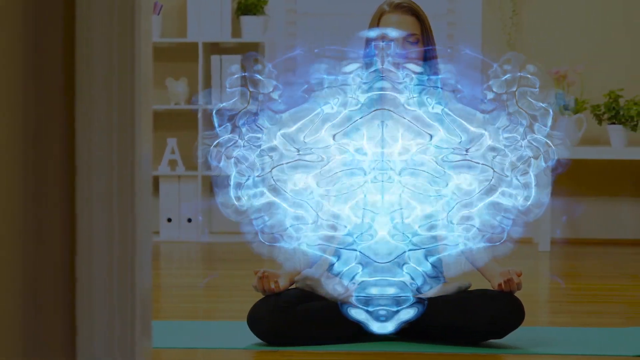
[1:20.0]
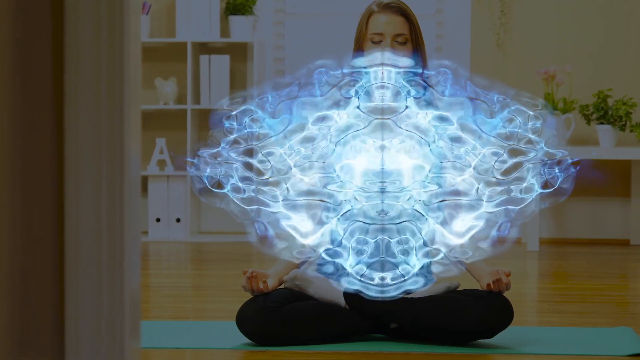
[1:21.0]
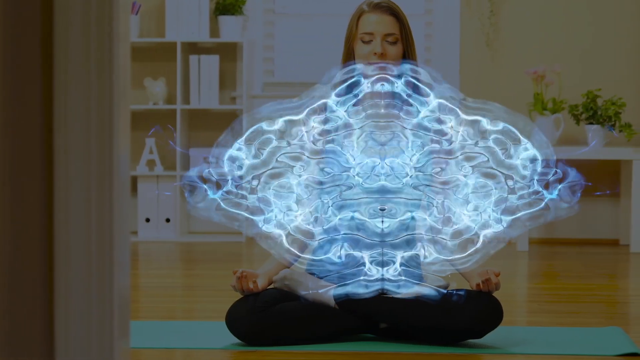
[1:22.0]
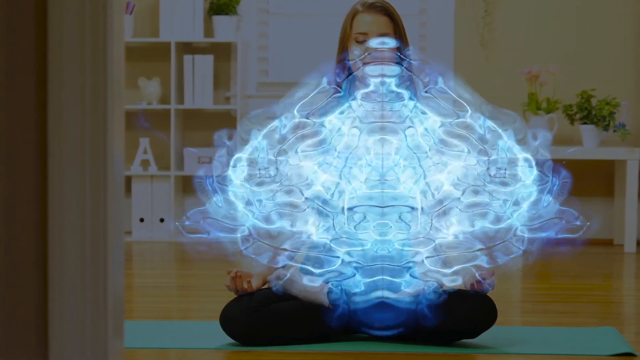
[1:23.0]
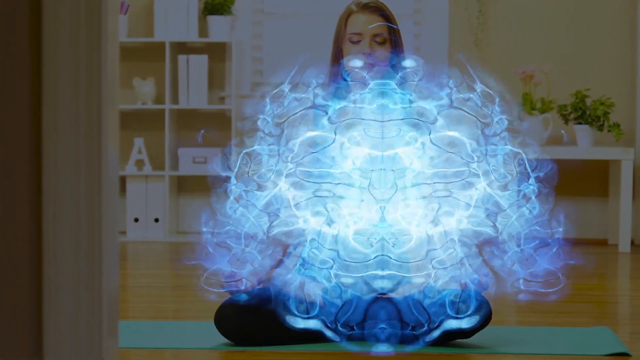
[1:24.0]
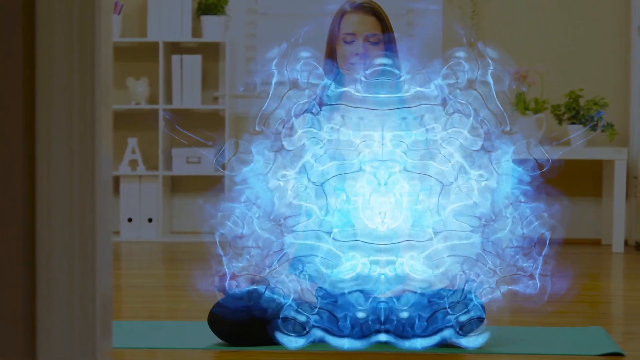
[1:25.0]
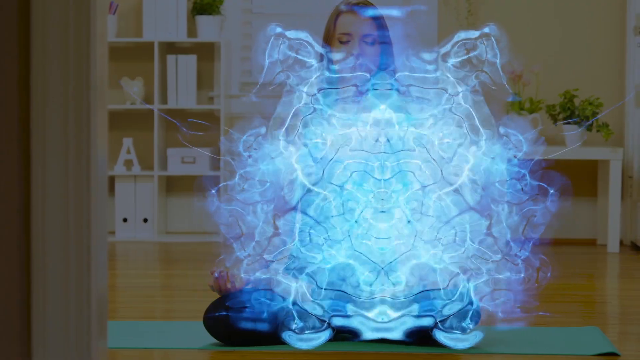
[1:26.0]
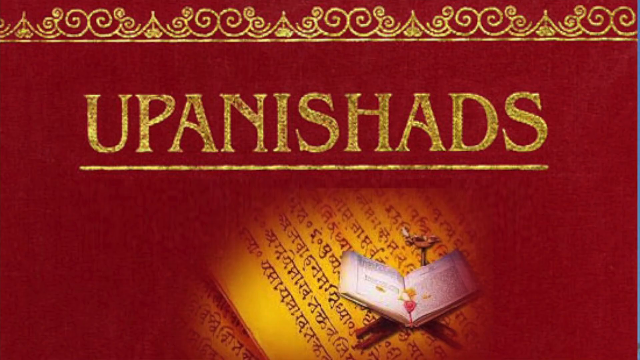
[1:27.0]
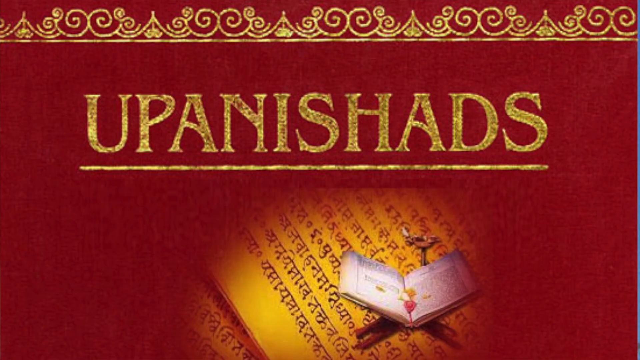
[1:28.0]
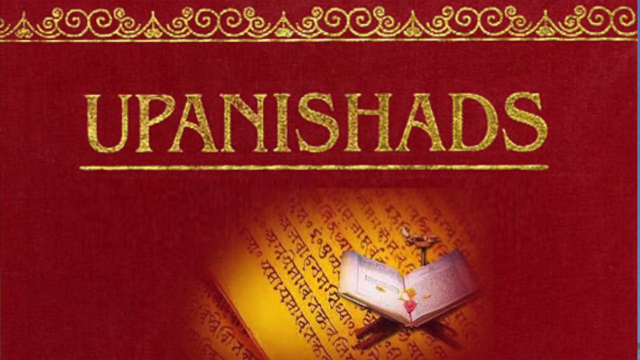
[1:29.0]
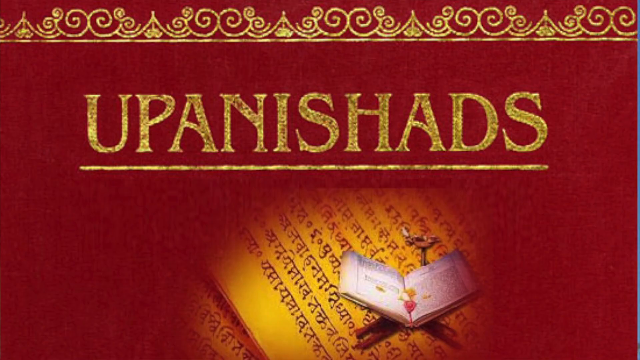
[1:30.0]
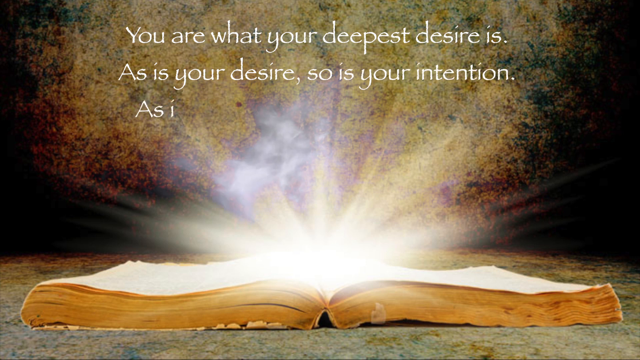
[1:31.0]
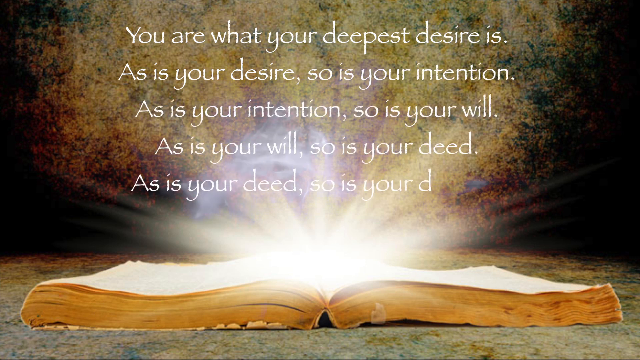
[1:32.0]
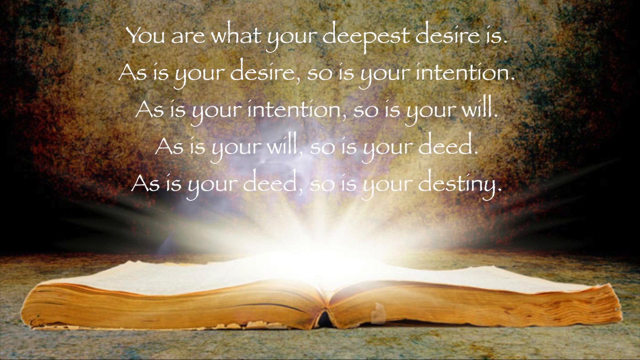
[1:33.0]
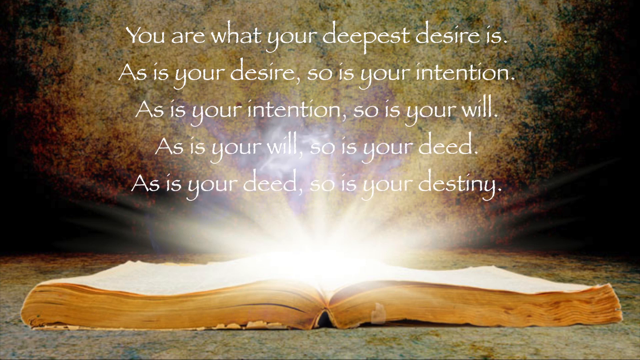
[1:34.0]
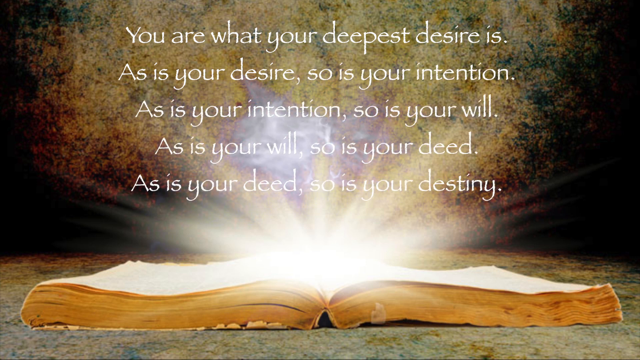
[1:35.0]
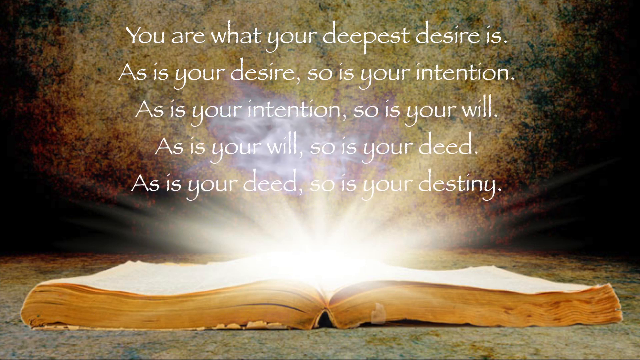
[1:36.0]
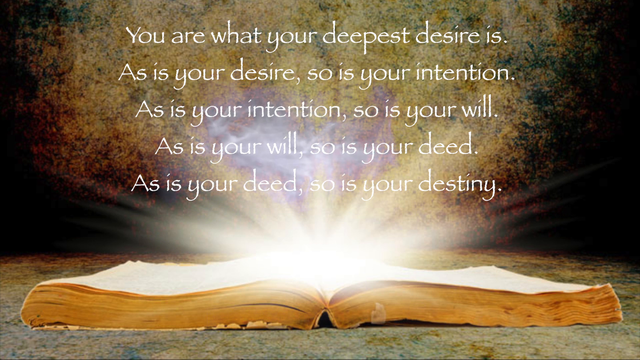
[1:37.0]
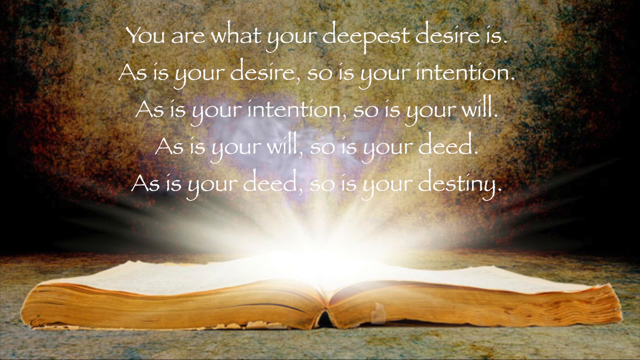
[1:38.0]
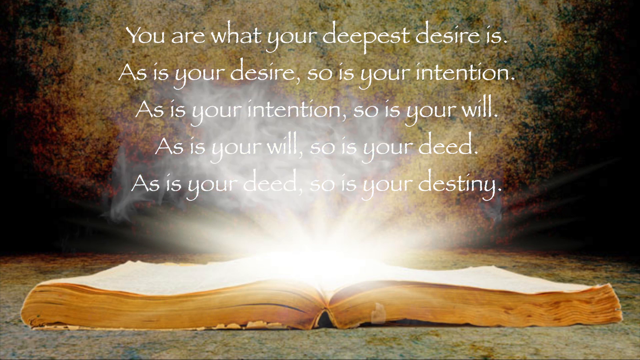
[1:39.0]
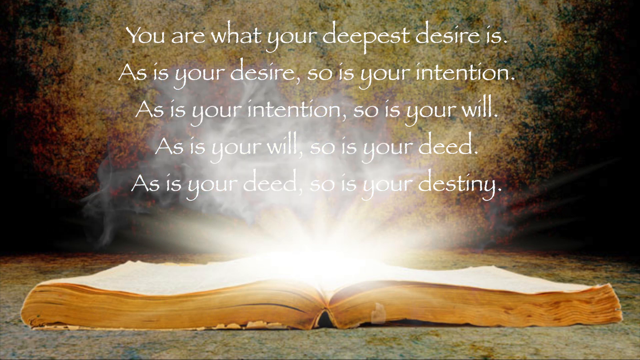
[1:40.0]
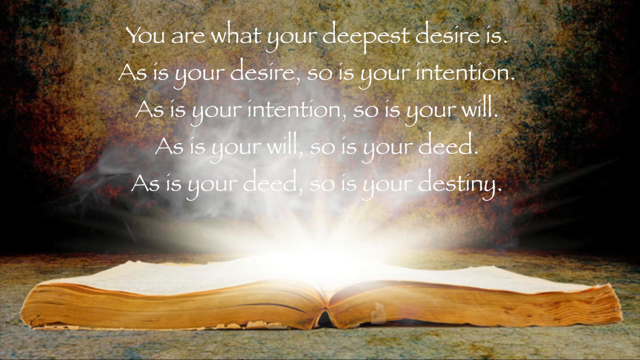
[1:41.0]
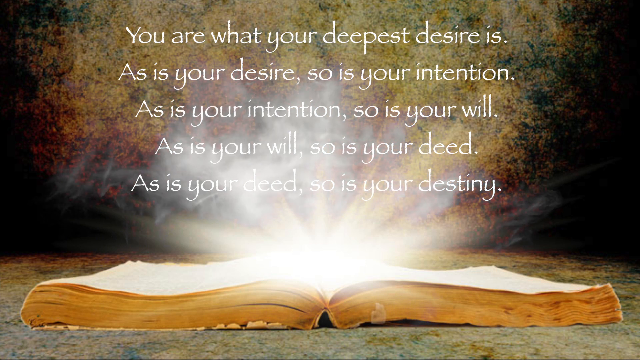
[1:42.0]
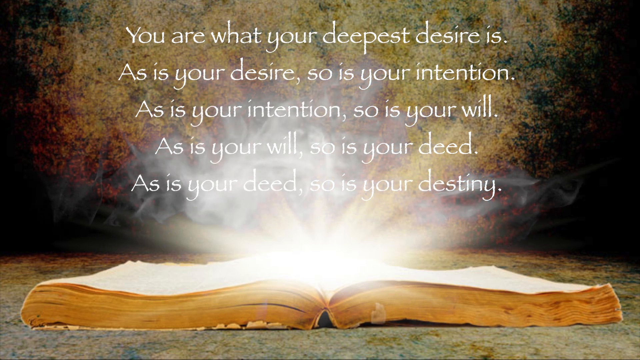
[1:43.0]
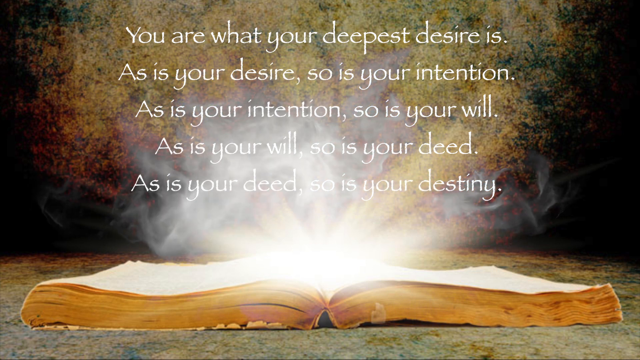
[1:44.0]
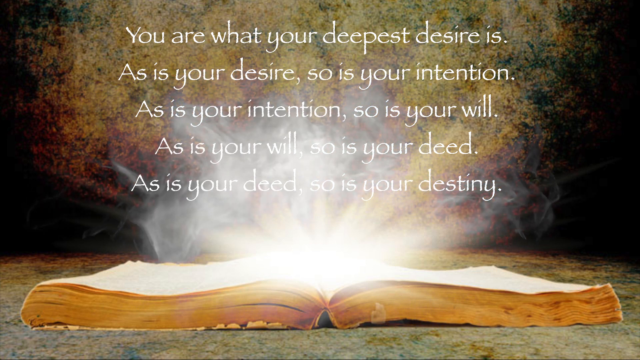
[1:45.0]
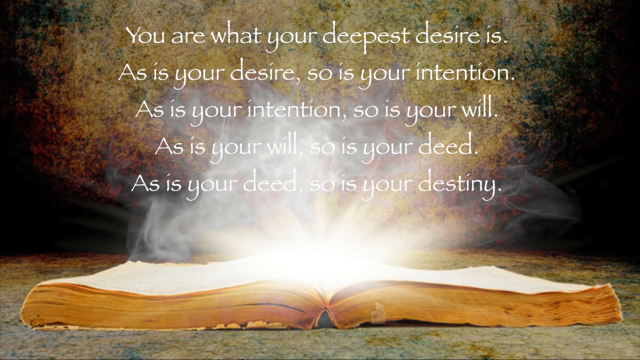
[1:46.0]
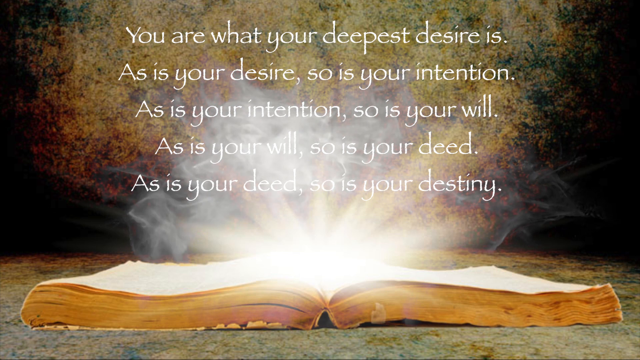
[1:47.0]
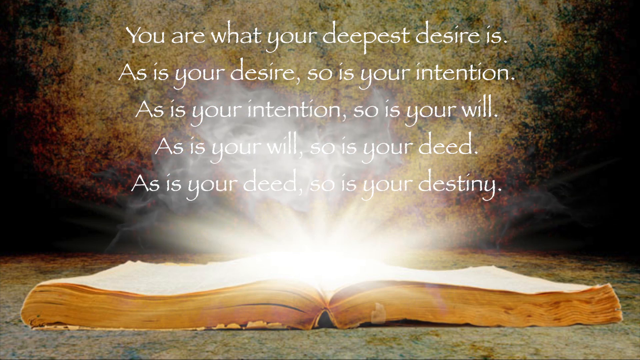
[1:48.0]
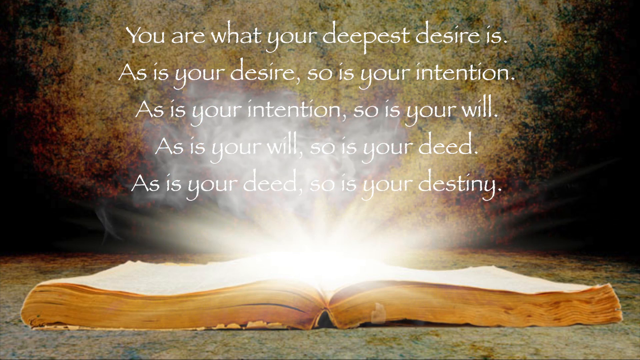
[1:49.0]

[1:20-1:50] The vortex is still moving in the center of the screen, and the image of the white woman sitting with her legs folded and her arms rested on her knees is still visible. Behind her are cupboards, shelves and a table with plants on it. The scenery changes to a very bright red background with a gold design on top and the gold word "Upanishads," underlined. Underneath it are writing in a foreign language and a book. The scenery changes again to an open book with a bright light coming out of it, against a background that looks like a forest. White text appears on the screen: "You are what your deepest desire is. As is your desire, so is your intention. As is your intention, so is your will. As is your will, so is your deed. As is your deed, so is your destiny." There seems to be some sort of smoke in the center as well.